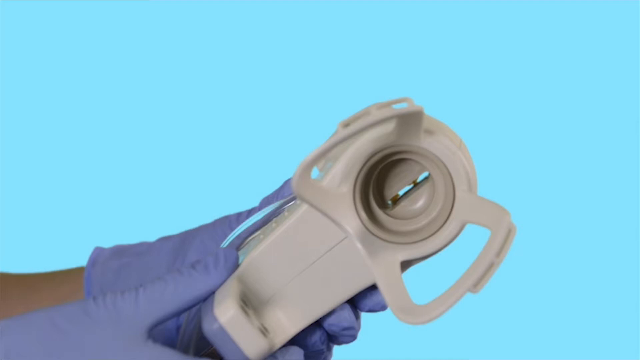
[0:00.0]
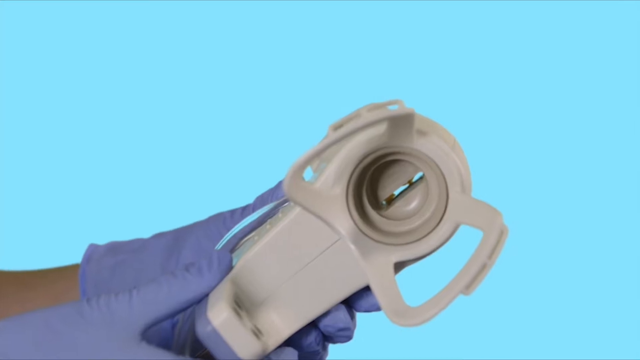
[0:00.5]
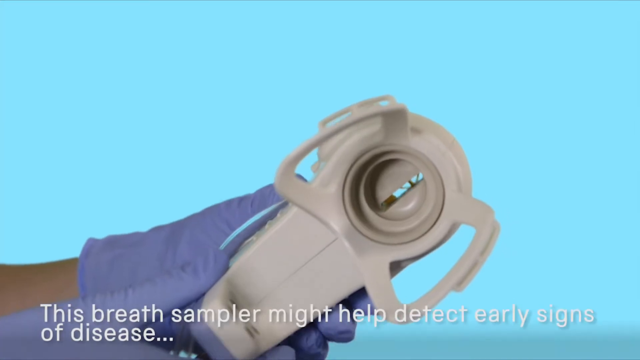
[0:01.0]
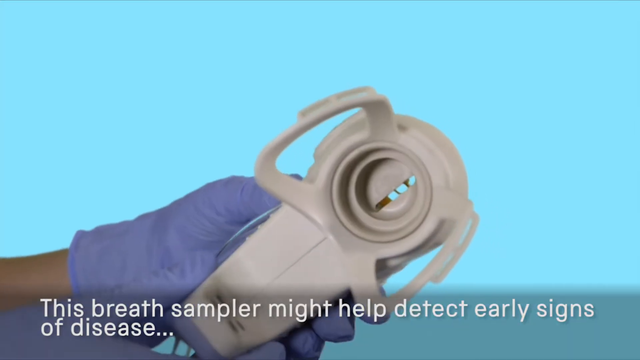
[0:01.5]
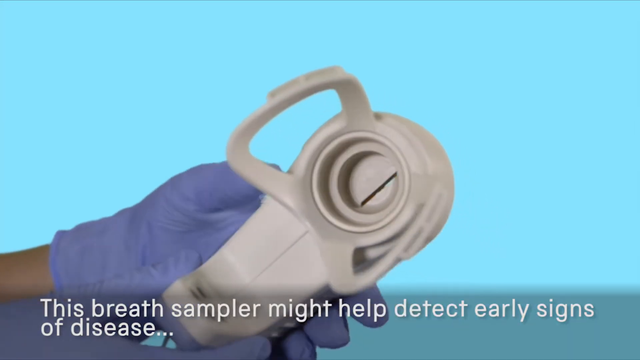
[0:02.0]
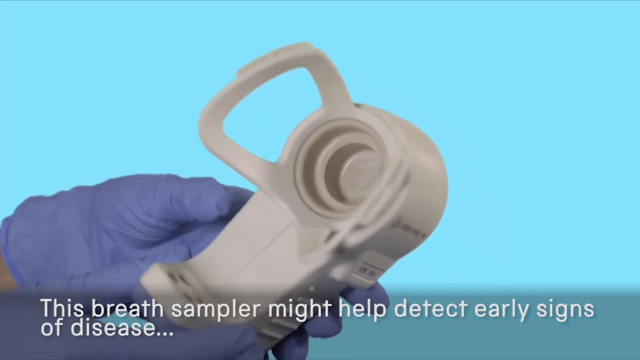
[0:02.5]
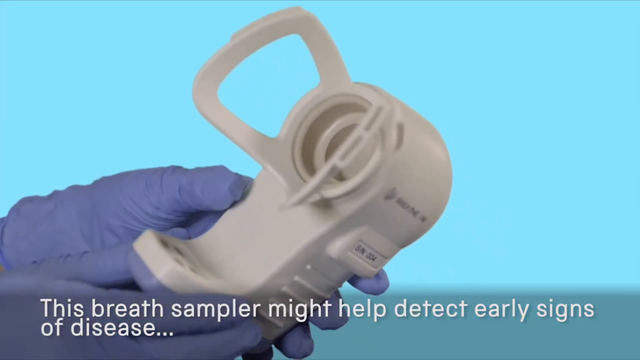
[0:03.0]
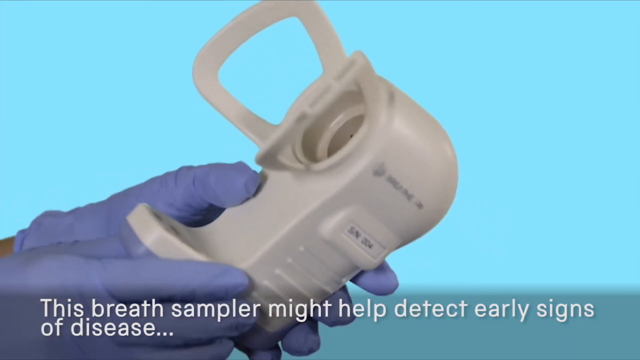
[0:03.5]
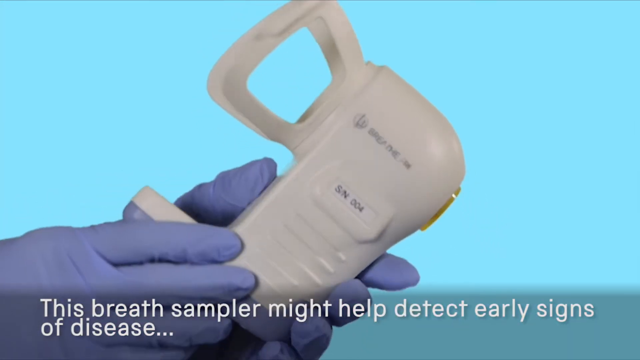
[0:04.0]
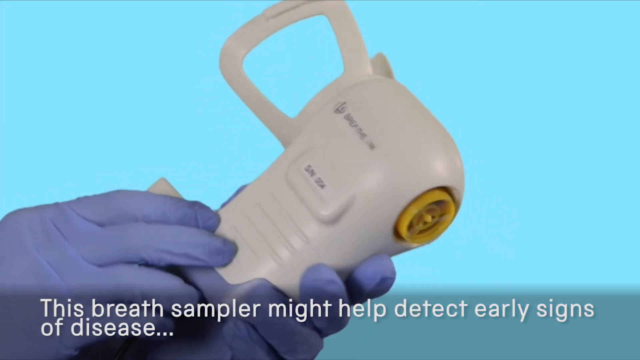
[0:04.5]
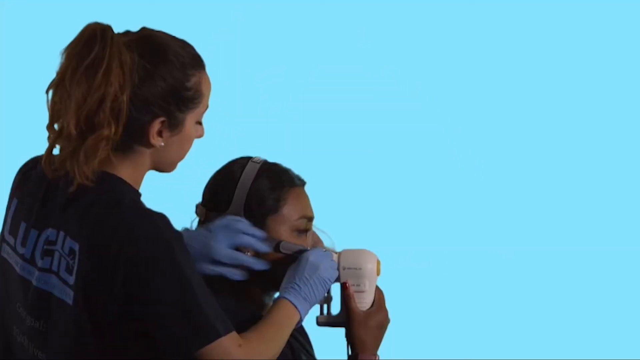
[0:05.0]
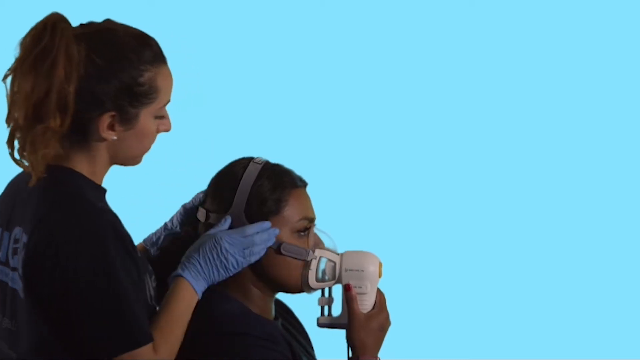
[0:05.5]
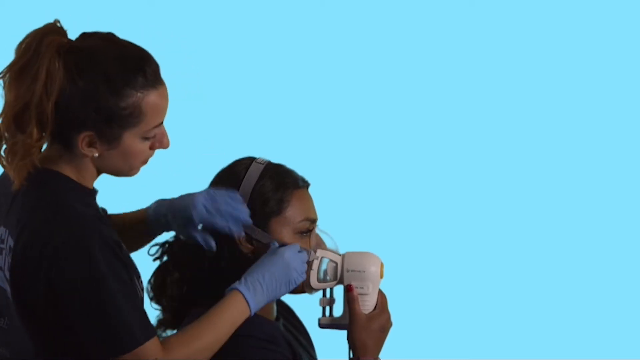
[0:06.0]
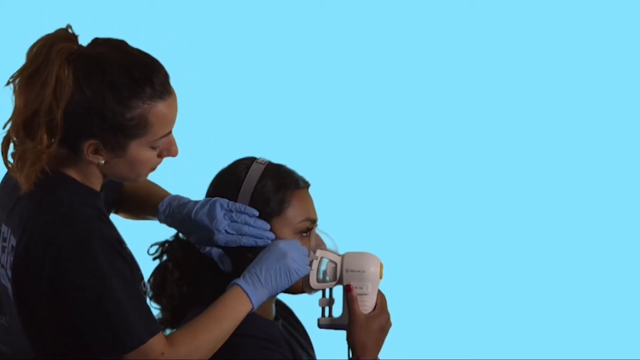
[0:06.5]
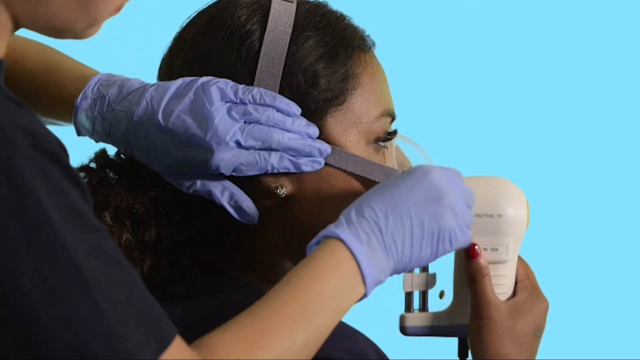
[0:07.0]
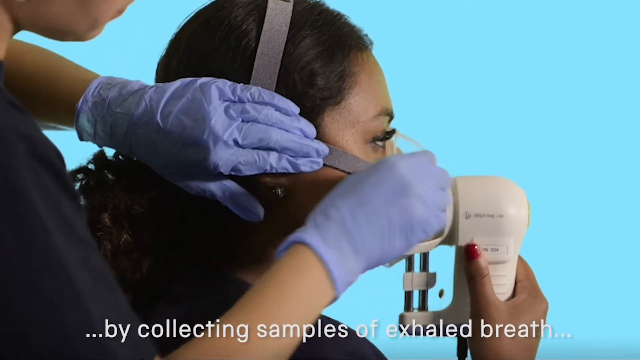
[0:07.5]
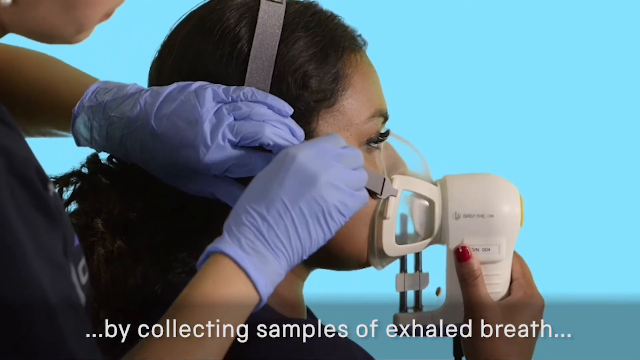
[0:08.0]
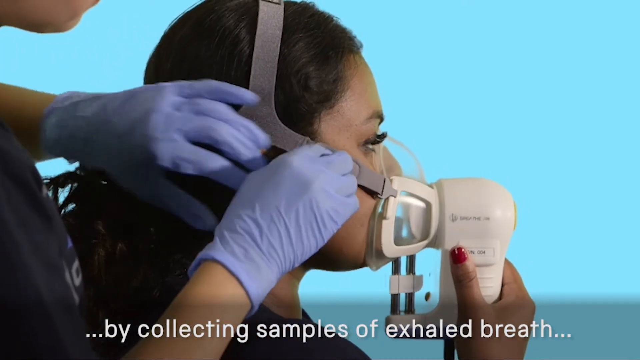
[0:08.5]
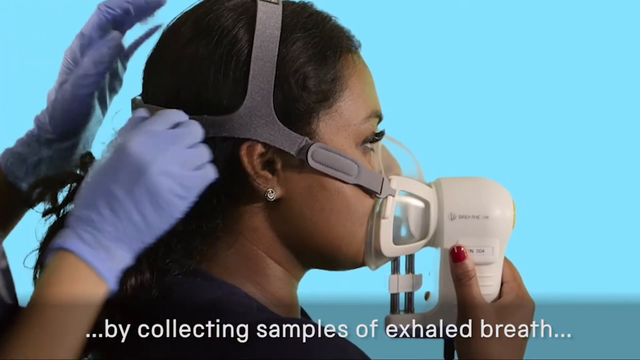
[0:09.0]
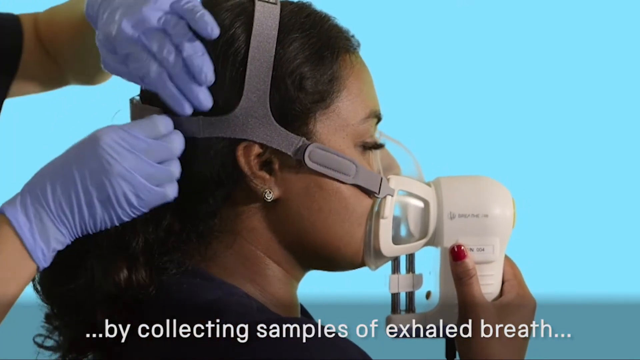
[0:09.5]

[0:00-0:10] The video concerns a medical device, a kind of breath sampler, not one for alcohol like those police carry but one for early signs of disease. In the first scene, the sampler is shown with its mask pointed toward the viewer, as if someone were about to take the test. In the second scene, one person gives the breath test to another. The one giving the test is taller and standing up, with her hair back in a single ponytail, and she holds a clear mask over the head and face of the woman in front of her, who is taking the test.